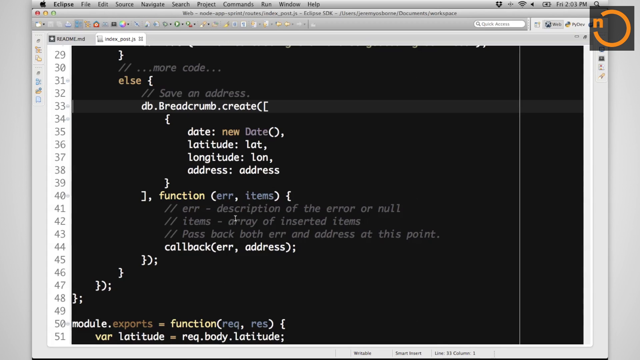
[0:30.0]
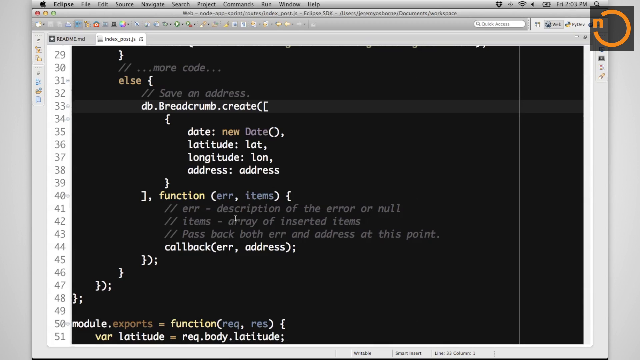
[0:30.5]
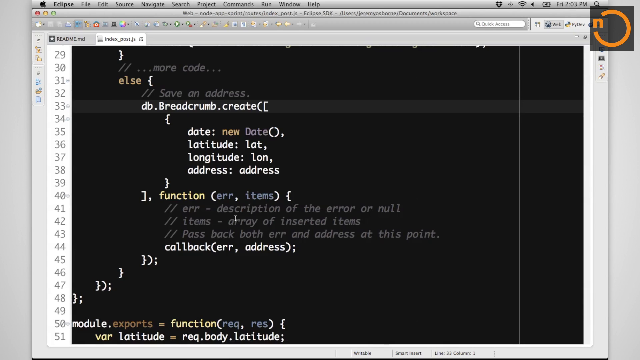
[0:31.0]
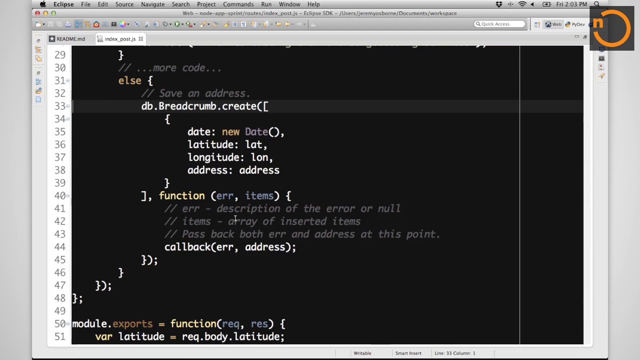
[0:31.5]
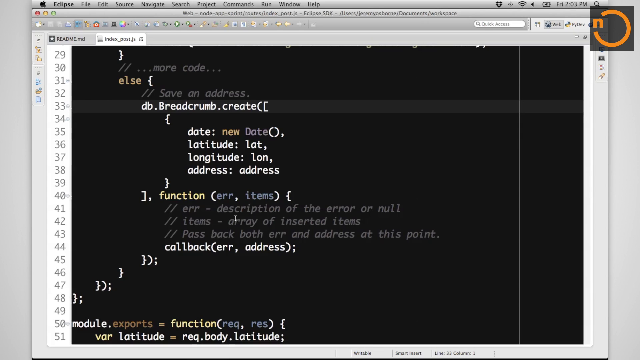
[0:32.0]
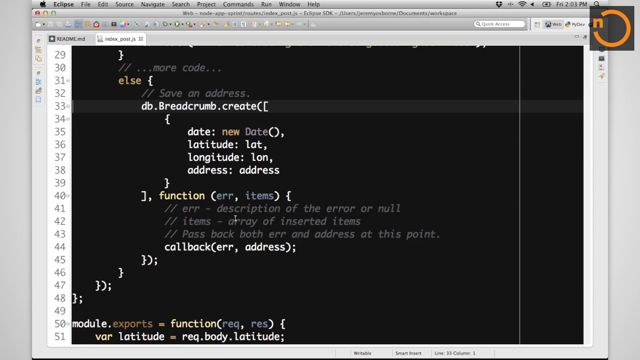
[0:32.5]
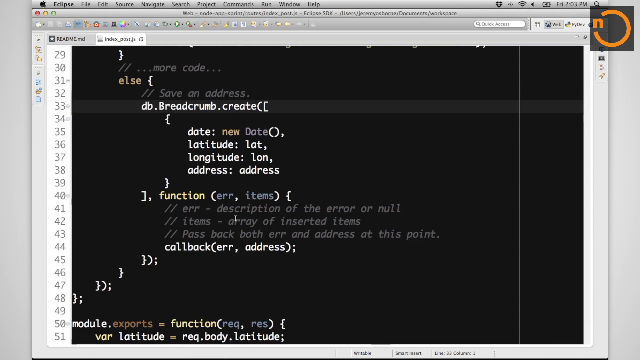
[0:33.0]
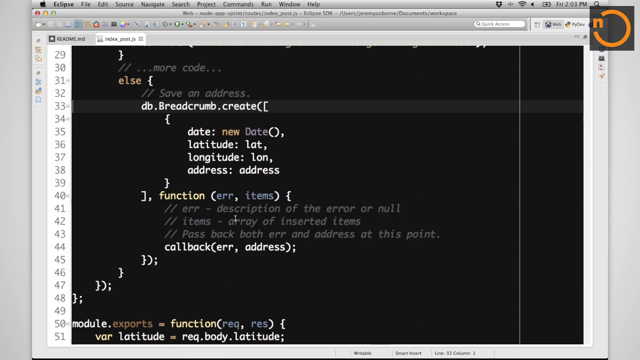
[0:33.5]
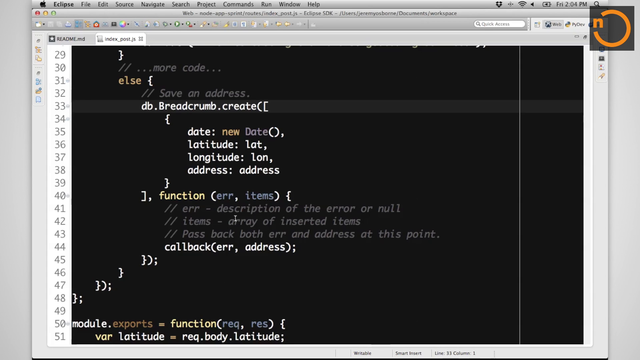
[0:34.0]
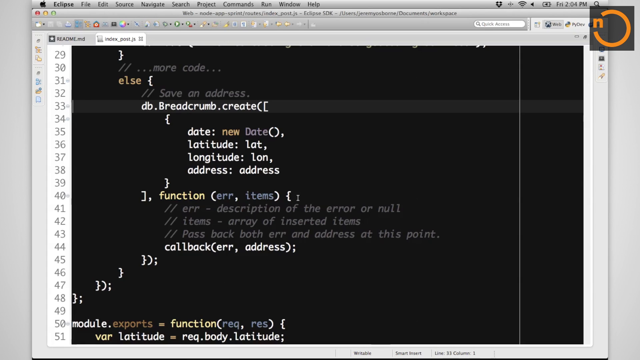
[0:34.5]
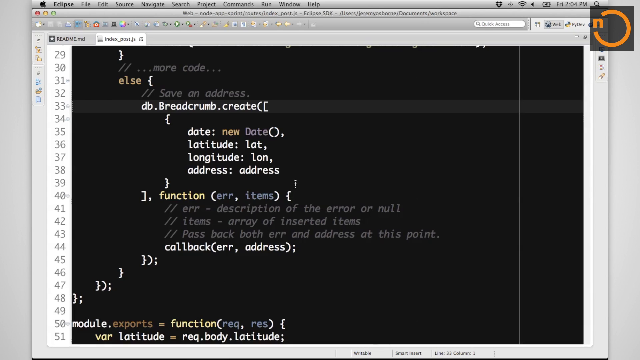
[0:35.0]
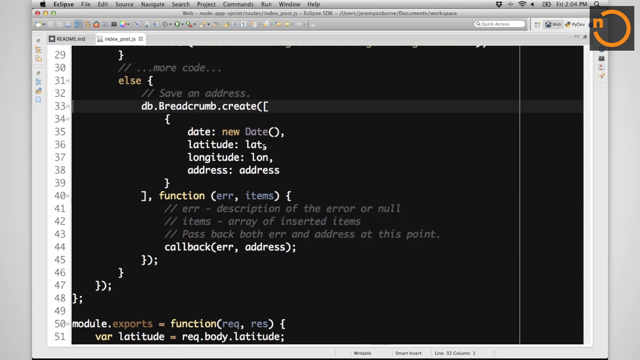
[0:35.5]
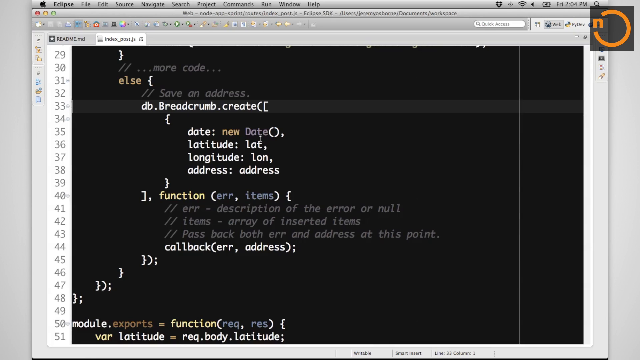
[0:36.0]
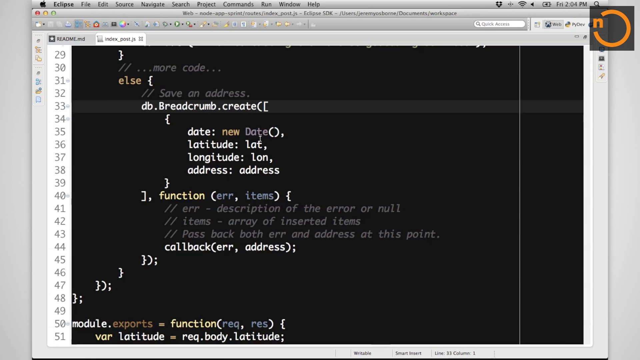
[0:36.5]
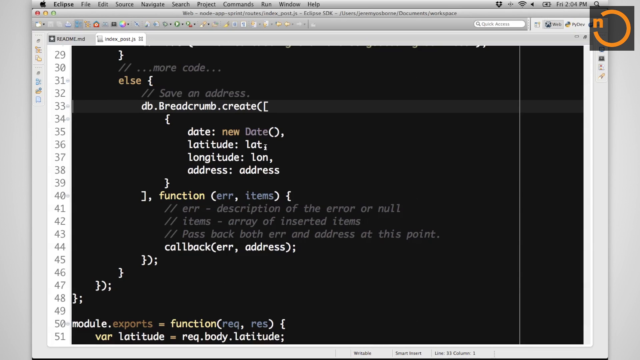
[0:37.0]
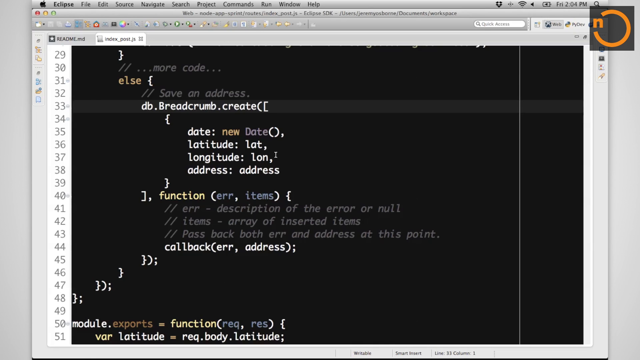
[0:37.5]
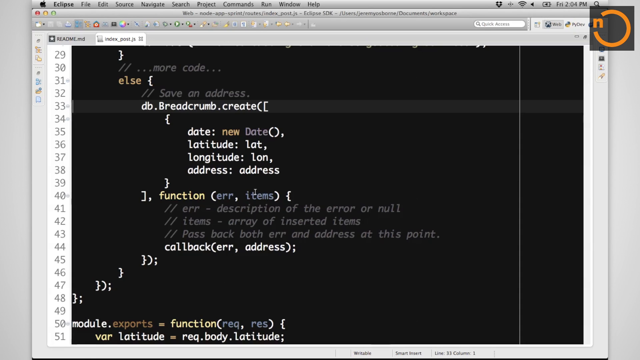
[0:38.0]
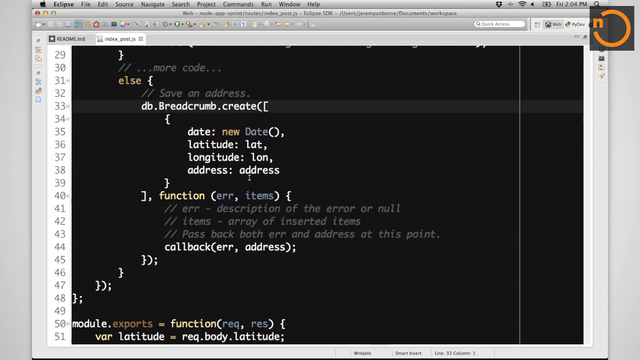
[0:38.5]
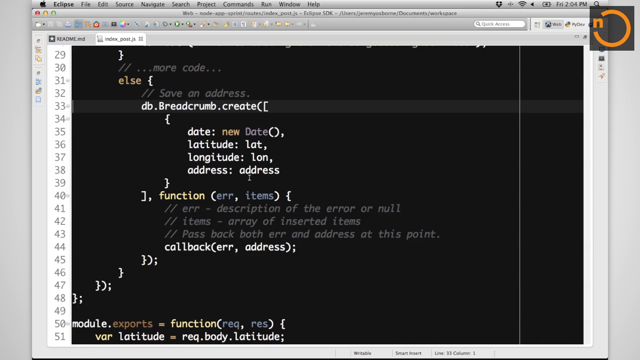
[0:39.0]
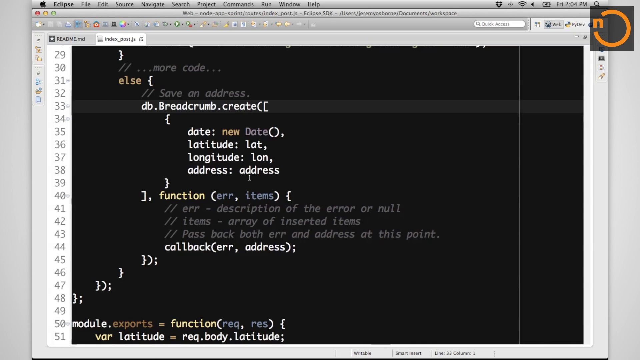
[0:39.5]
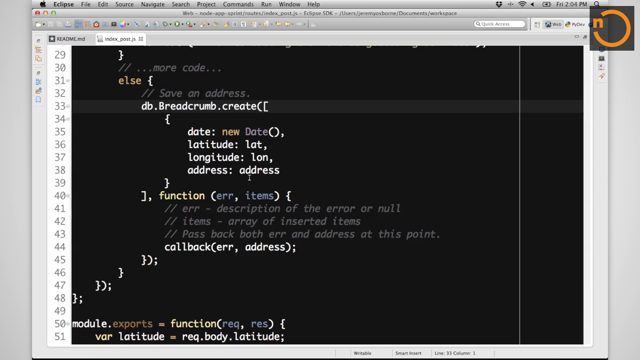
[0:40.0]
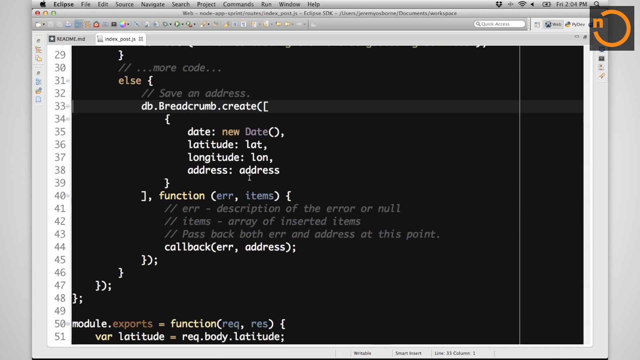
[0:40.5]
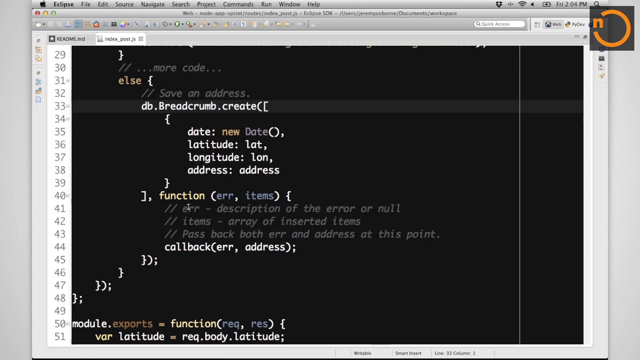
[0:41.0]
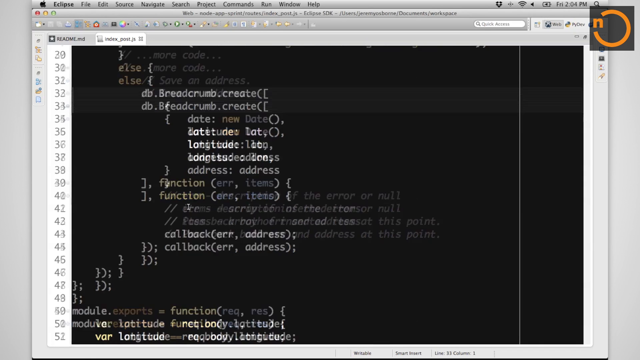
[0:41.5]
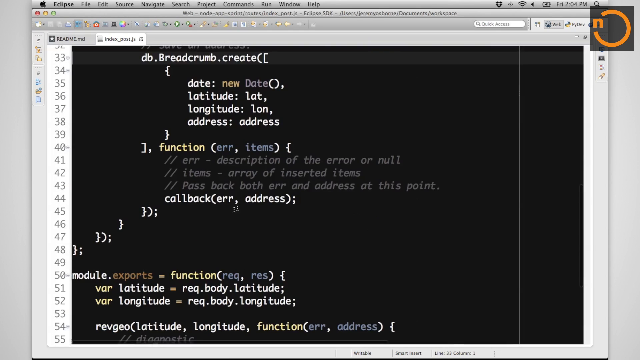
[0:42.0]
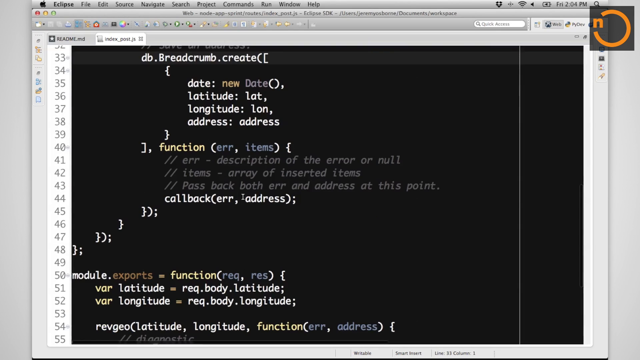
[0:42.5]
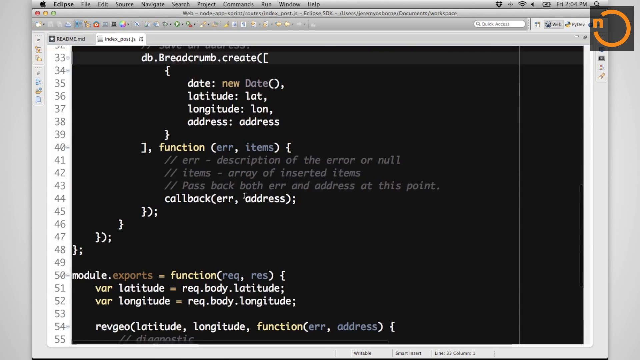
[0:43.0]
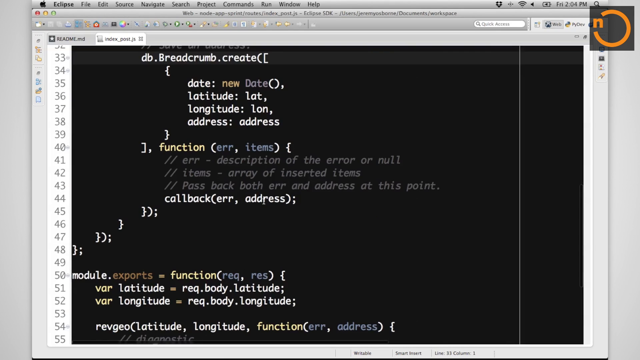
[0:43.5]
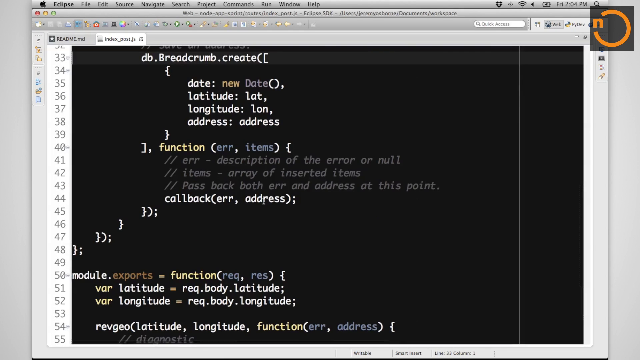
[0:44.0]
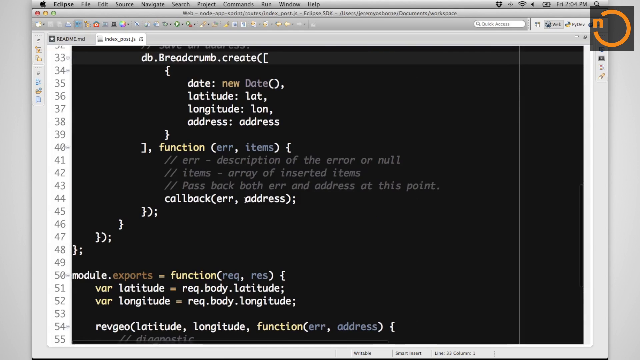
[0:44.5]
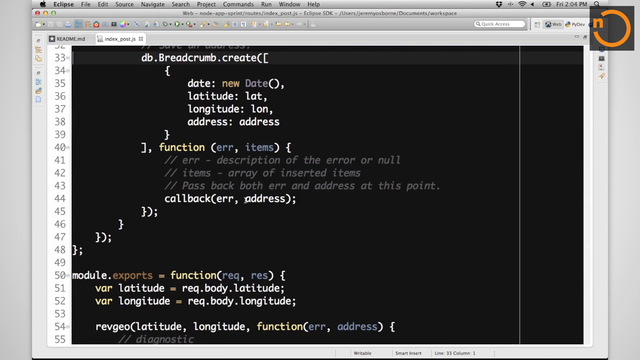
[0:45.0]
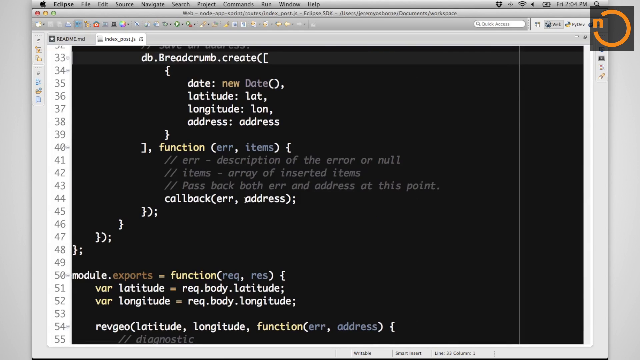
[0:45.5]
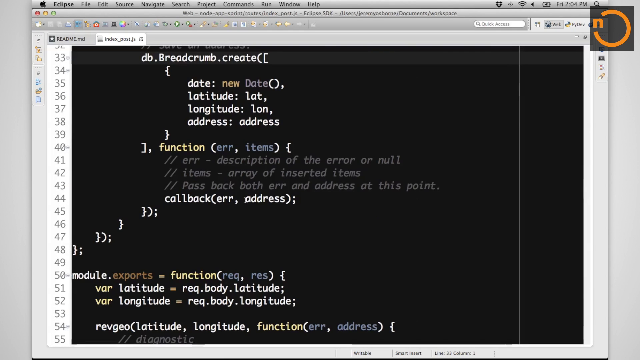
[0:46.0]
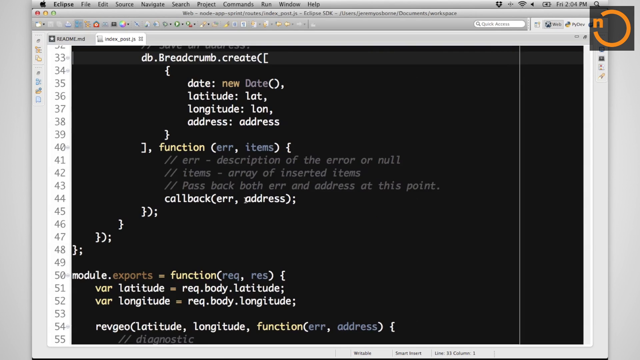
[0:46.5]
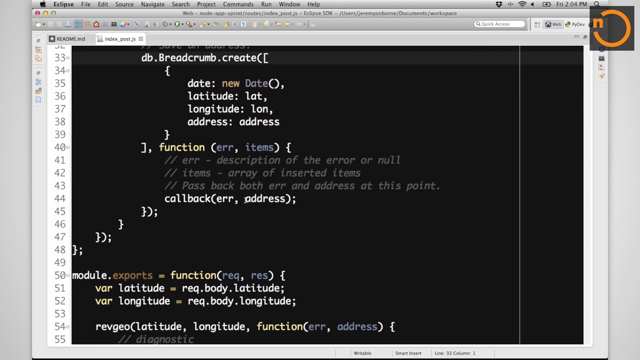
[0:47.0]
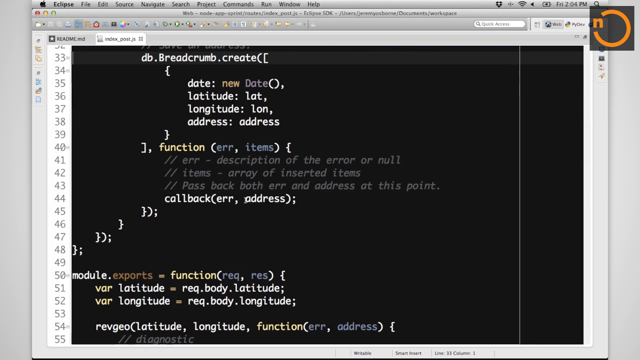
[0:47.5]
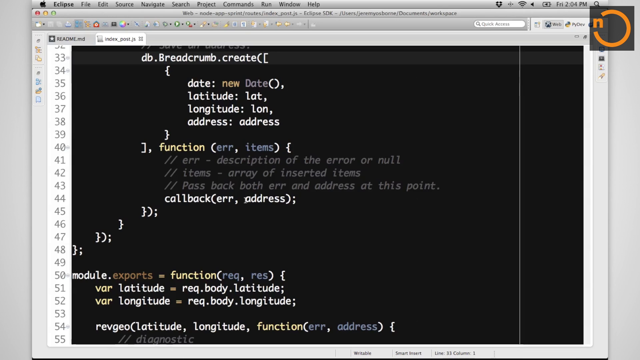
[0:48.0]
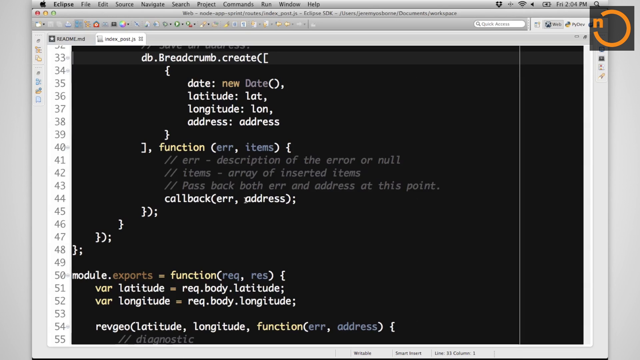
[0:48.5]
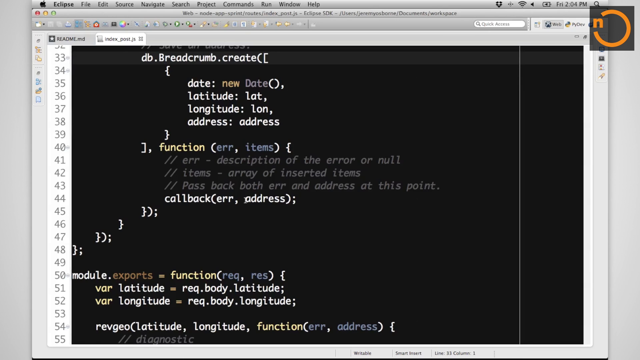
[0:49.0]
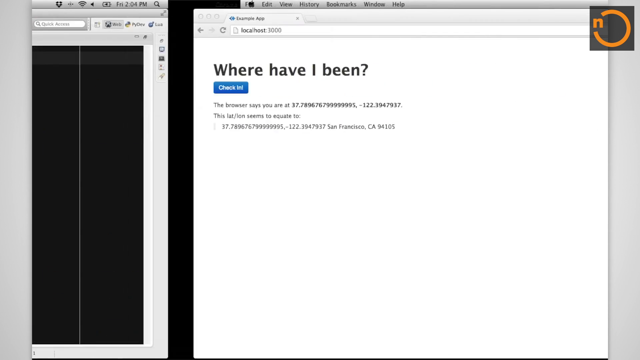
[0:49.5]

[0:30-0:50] At line 51, the mouse is moved to the function bar, to address. The mouse keeps moving over the functions, and address, latitude and longitude functions are on the screen. It is most likely a development and coding class in which code is demonstrated live.